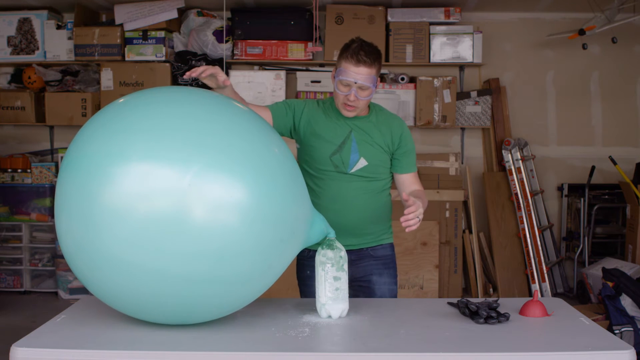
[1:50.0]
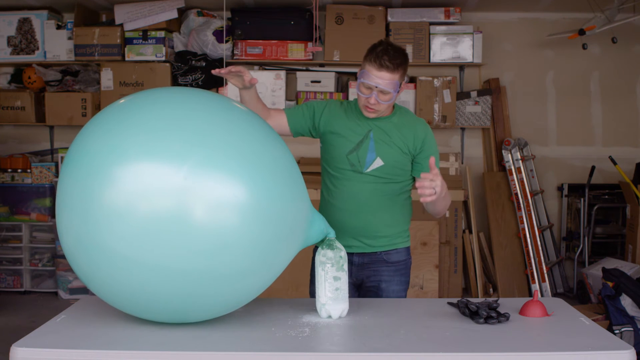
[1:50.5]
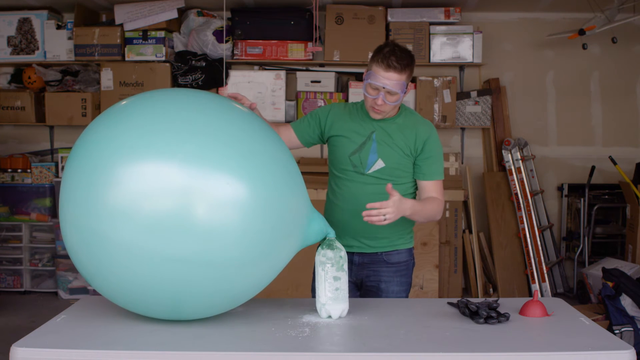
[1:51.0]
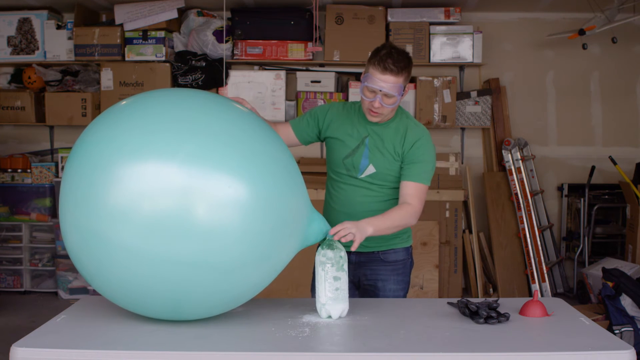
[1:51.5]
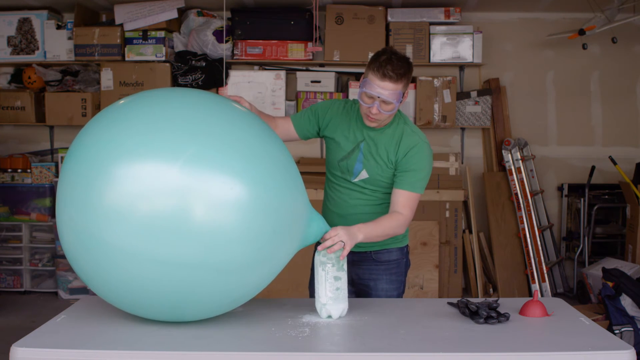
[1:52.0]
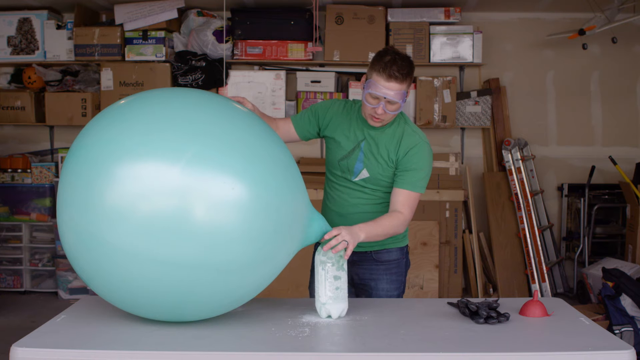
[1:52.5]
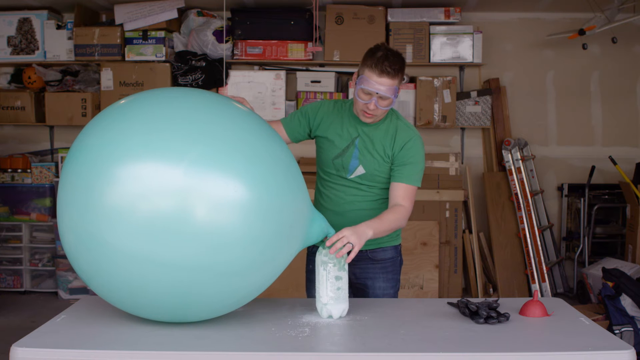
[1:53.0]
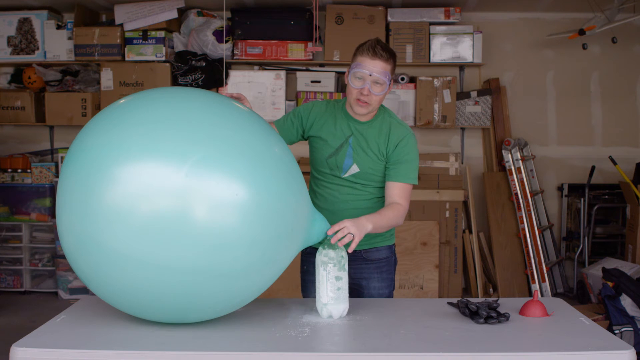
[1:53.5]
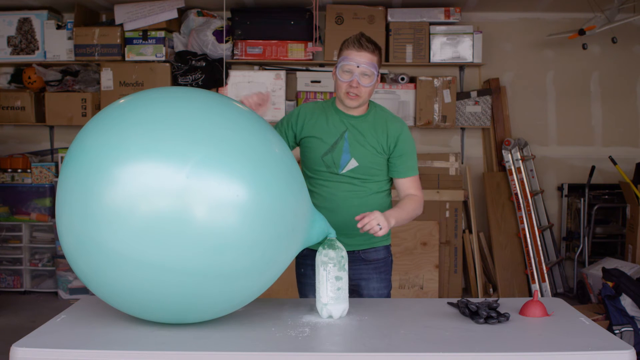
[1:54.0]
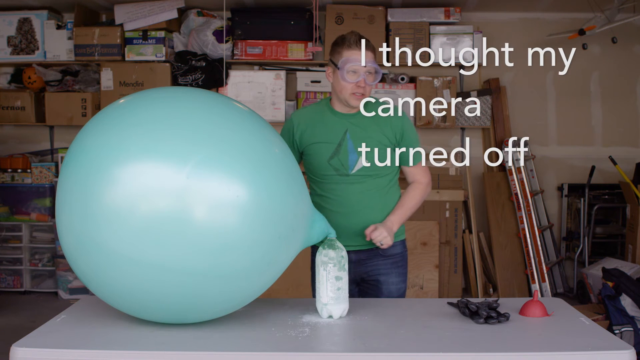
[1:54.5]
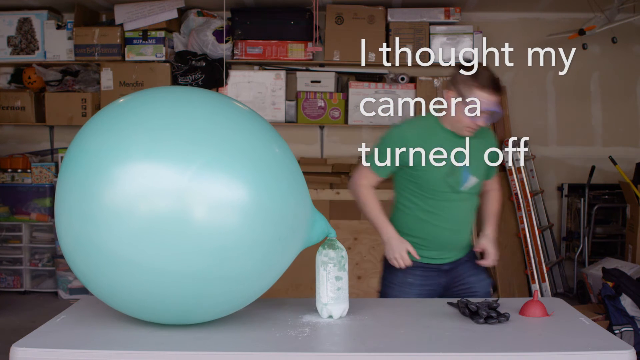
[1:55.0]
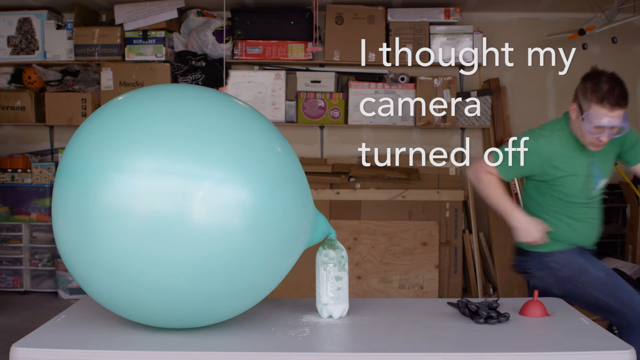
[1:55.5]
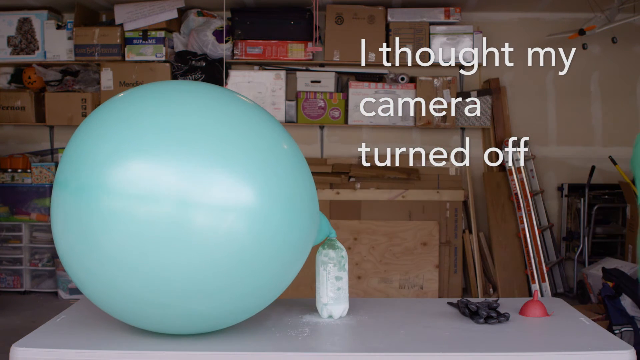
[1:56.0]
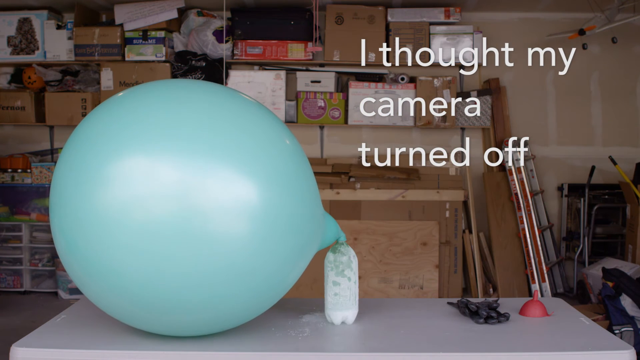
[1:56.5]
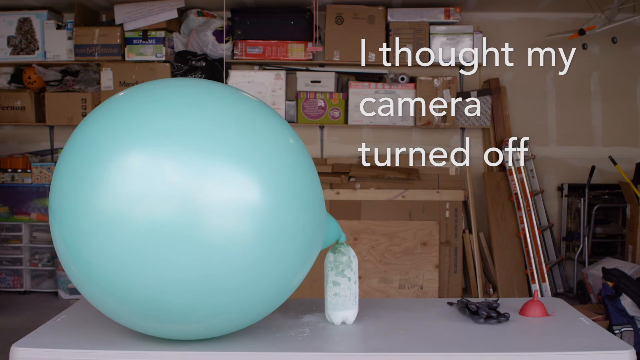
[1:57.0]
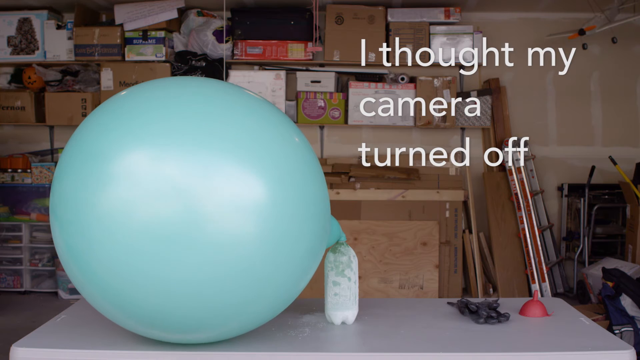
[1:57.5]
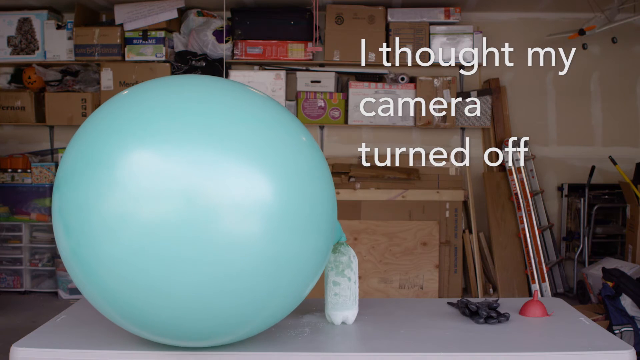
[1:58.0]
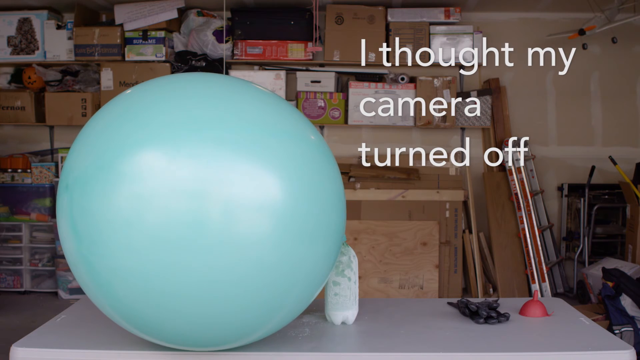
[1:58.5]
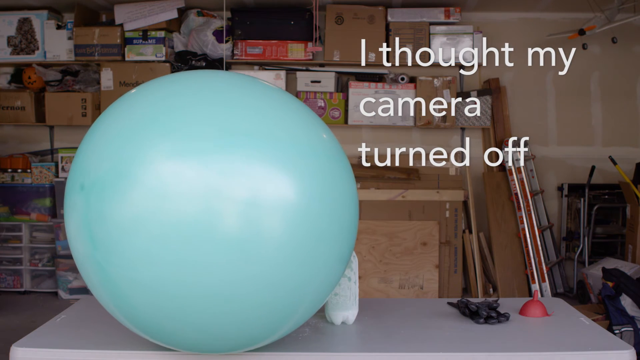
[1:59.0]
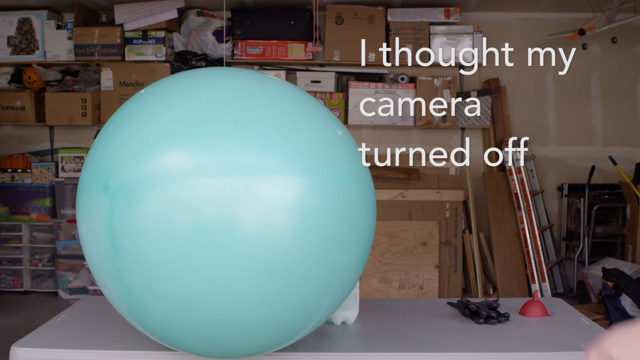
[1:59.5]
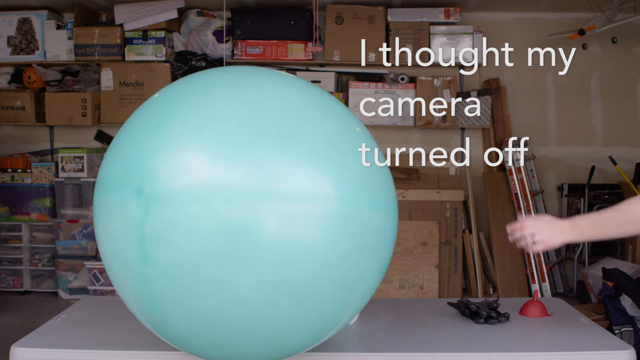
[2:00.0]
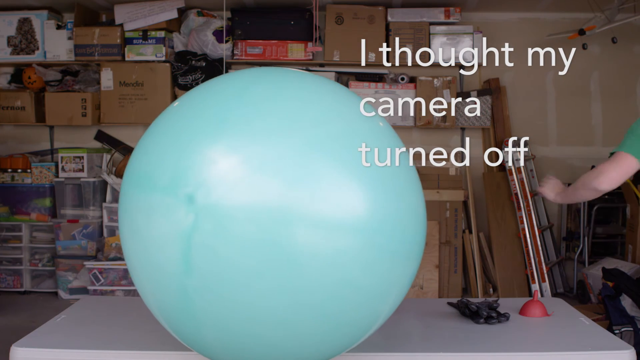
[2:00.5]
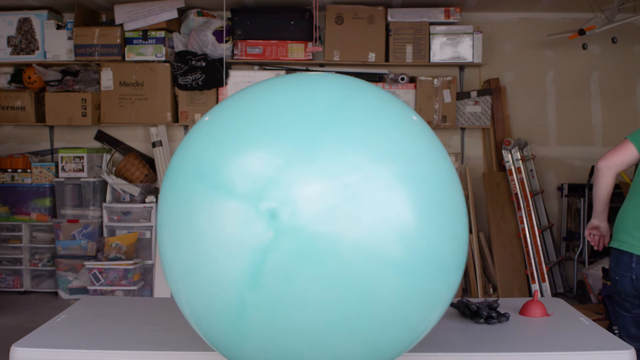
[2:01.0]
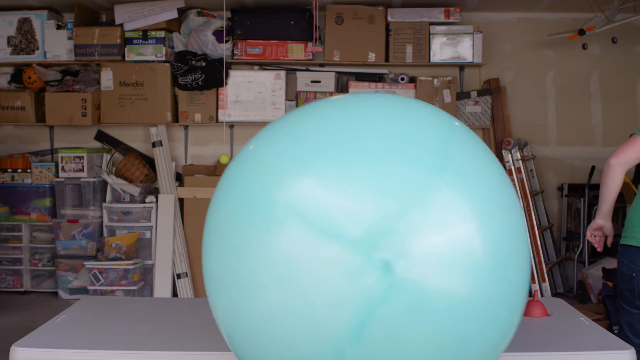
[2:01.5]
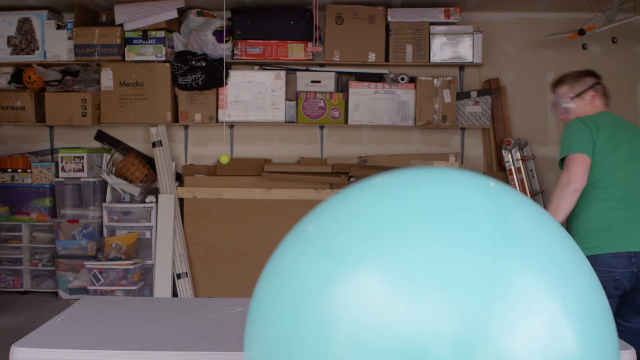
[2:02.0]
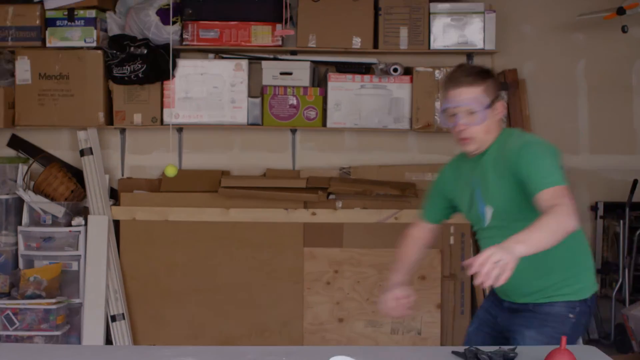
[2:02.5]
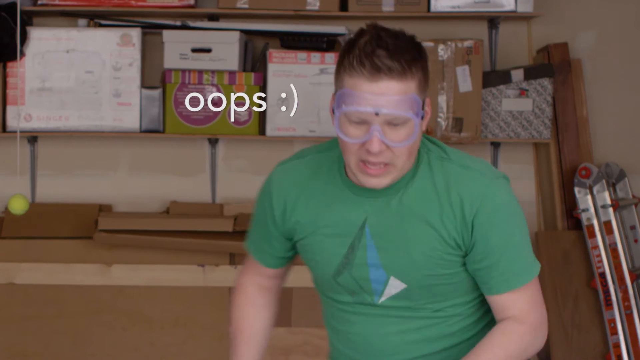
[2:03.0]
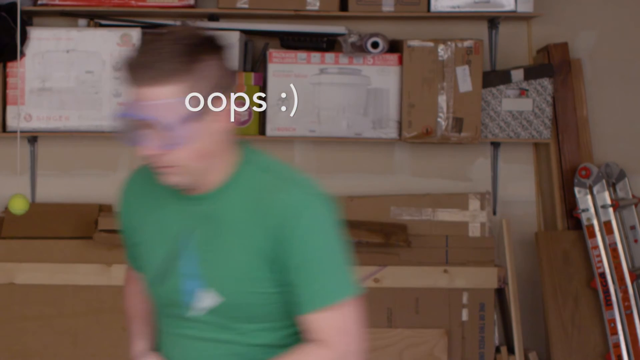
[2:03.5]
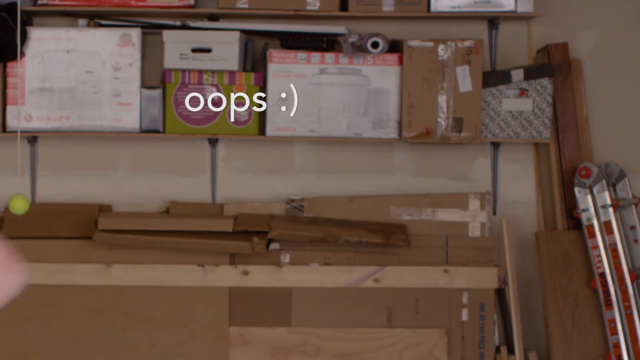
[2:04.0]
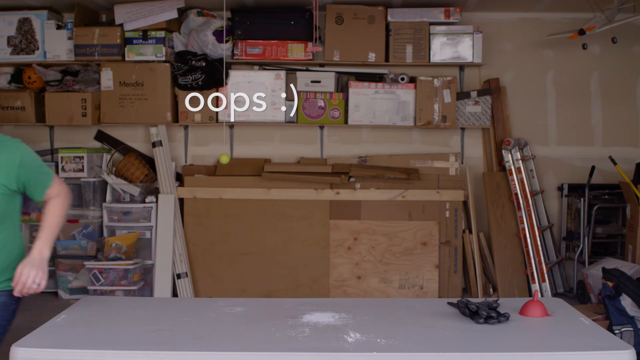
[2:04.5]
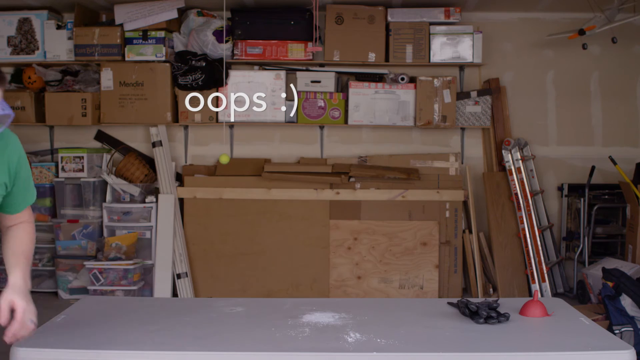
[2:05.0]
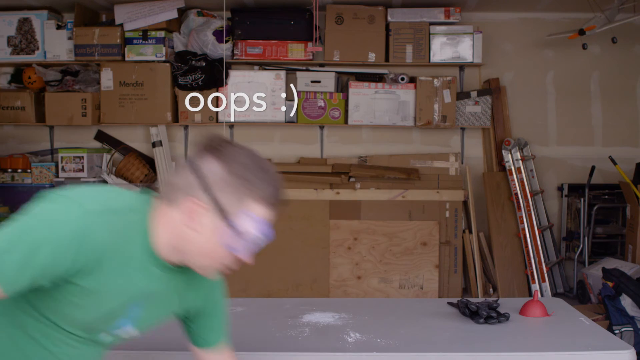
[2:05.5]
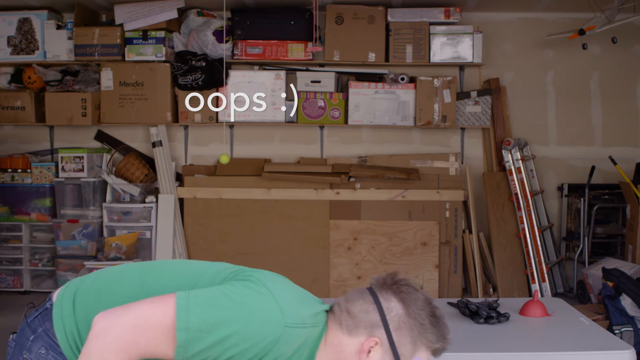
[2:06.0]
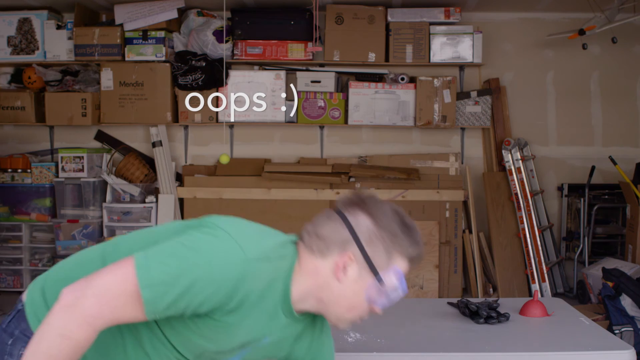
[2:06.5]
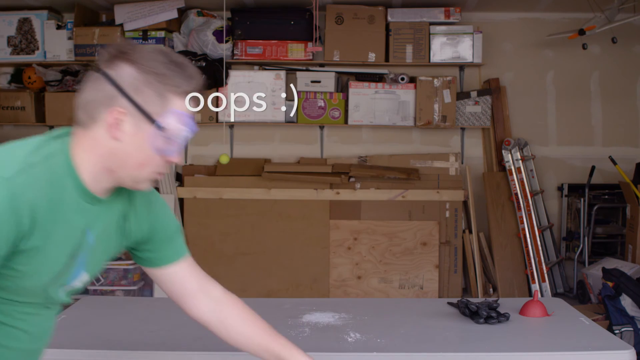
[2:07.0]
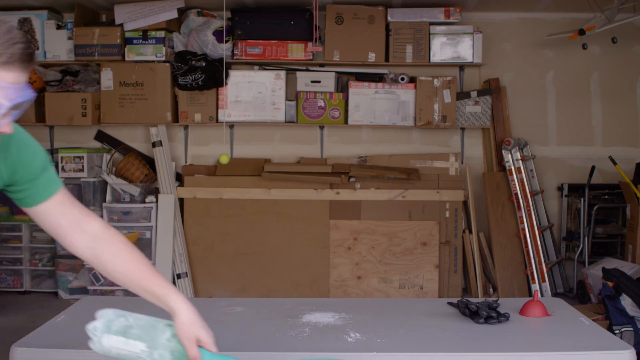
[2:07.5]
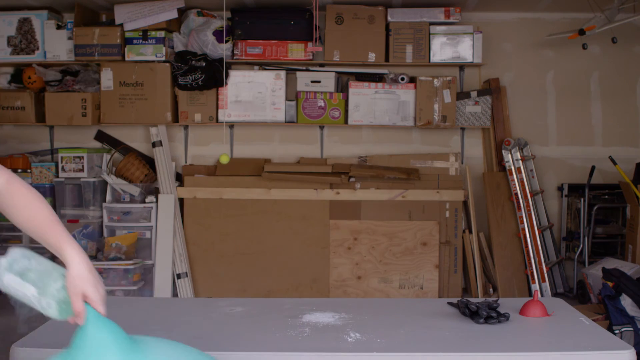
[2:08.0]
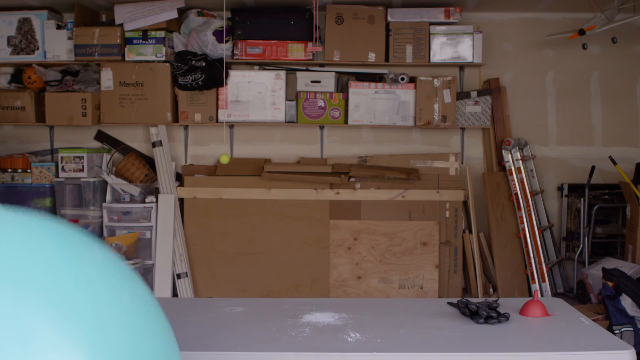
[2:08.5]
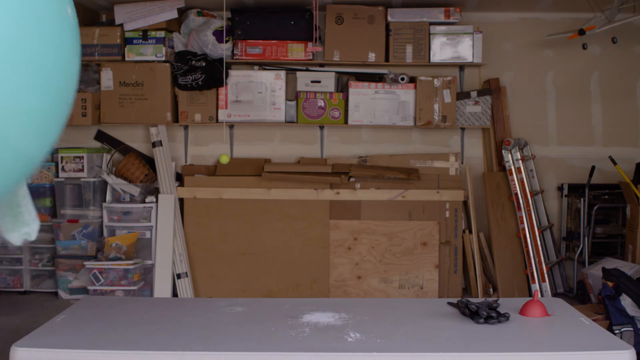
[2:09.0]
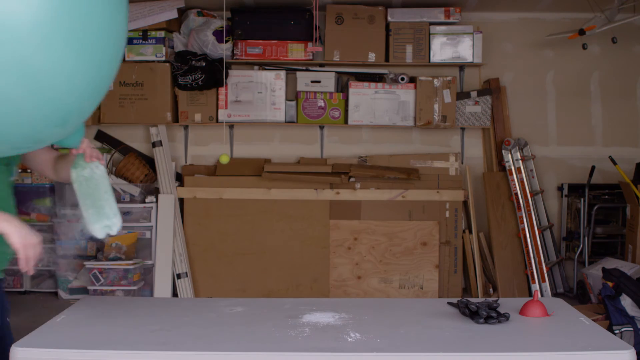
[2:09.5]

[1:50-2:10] The green balloon expands slowly, and text says "I thought my camera turned off so". The man walks away from the green balloon, and by accident the whole thing falls to the ground, making a huge mess. He lifts up the green balloon, now inflated a lot, and the empty green bottle with white nitrogen stuck to its side, picking both up off the ground and putting them back on the table. He stays focused on the experiment; a funnel is there, and more boxes are in the background.